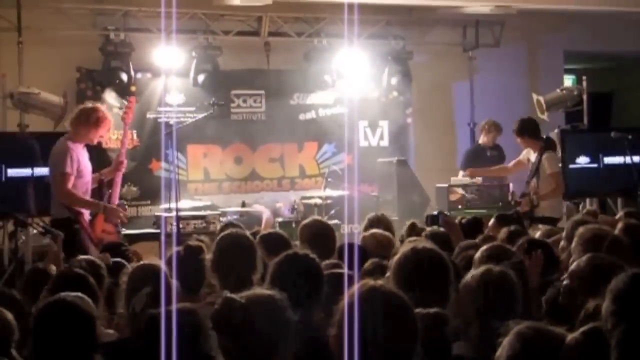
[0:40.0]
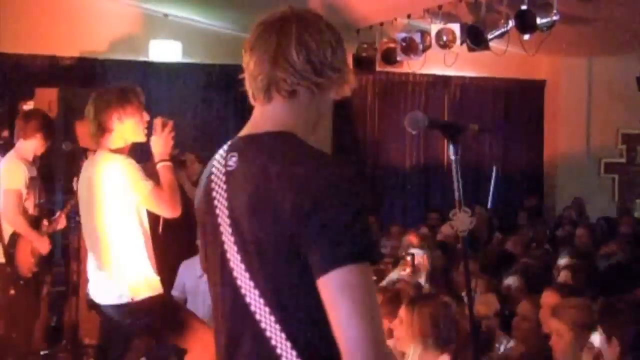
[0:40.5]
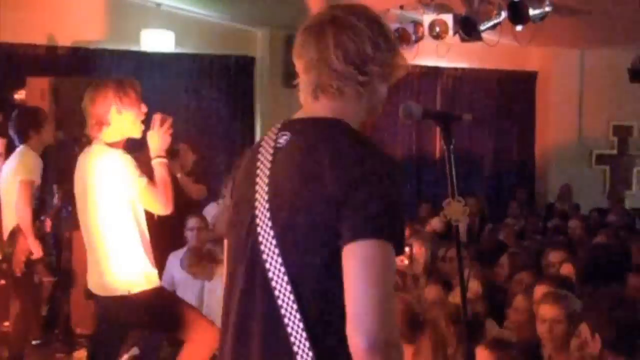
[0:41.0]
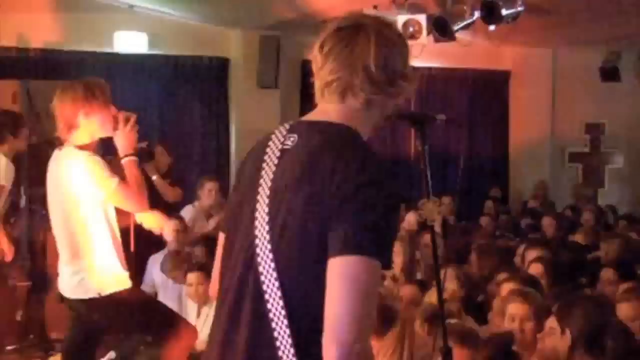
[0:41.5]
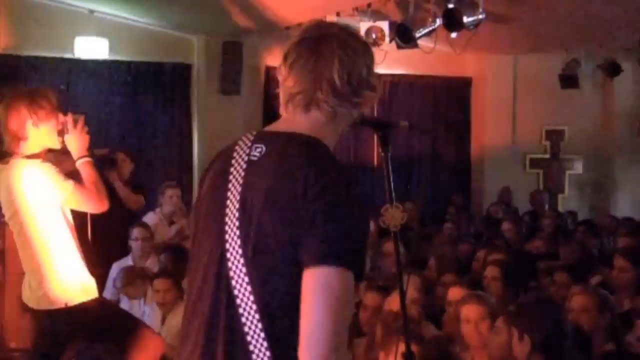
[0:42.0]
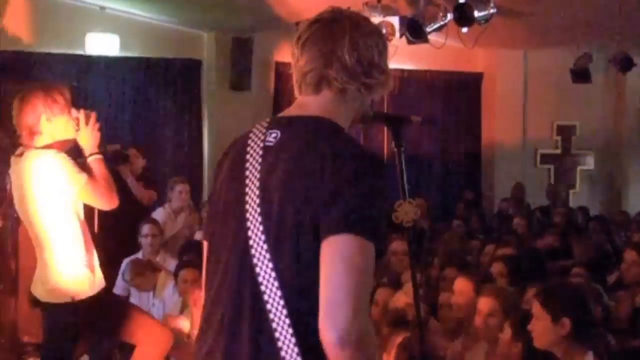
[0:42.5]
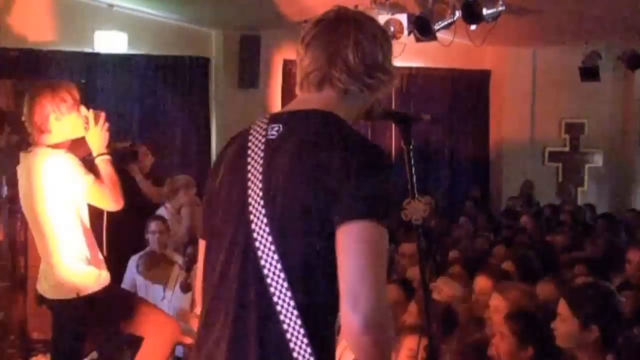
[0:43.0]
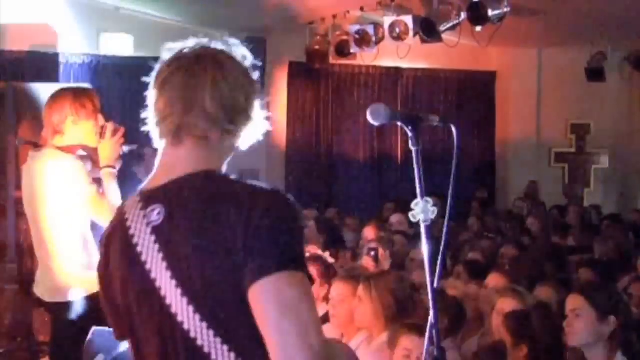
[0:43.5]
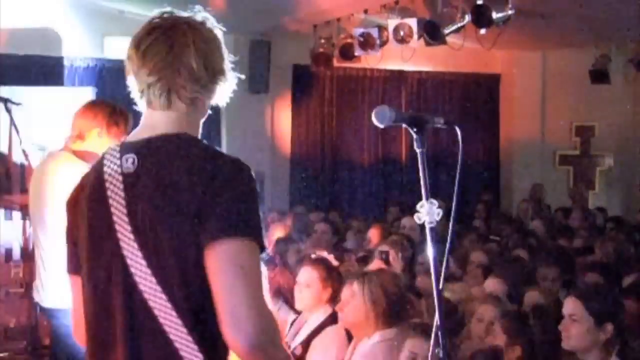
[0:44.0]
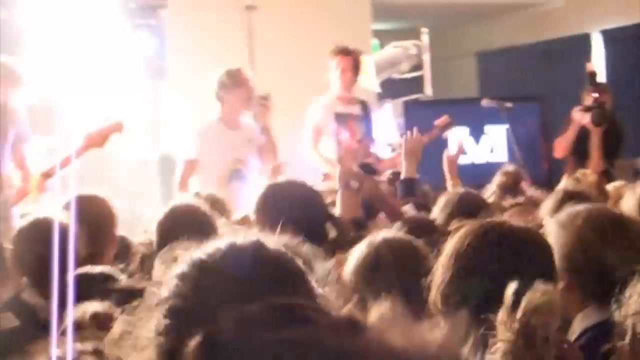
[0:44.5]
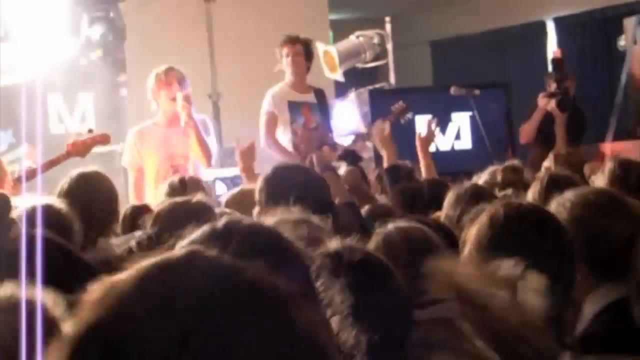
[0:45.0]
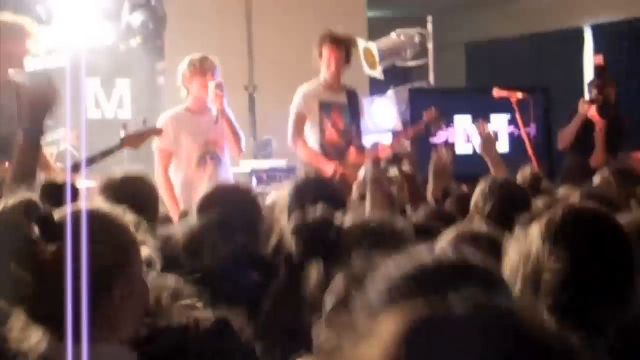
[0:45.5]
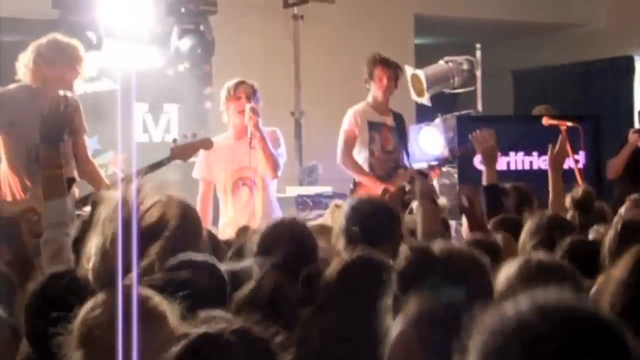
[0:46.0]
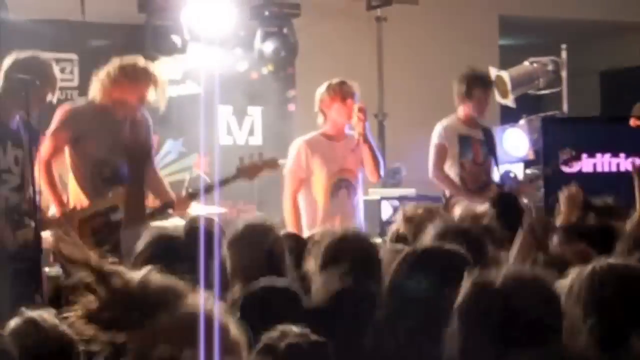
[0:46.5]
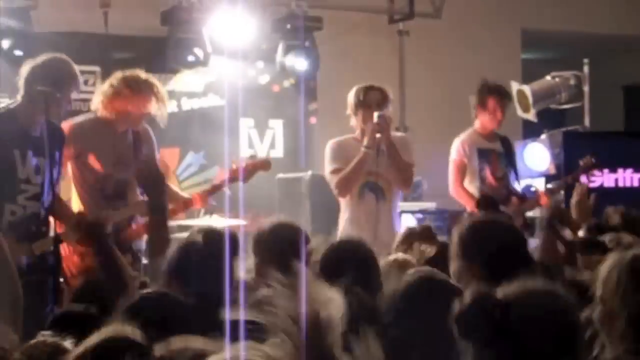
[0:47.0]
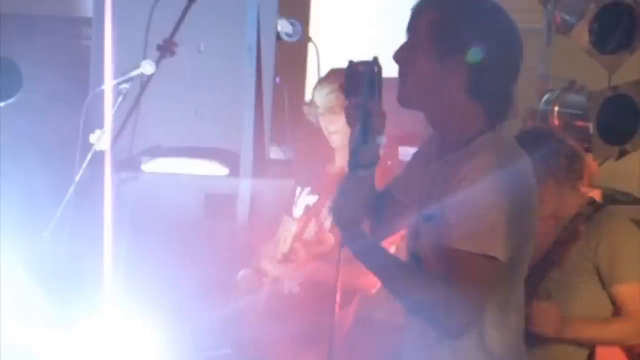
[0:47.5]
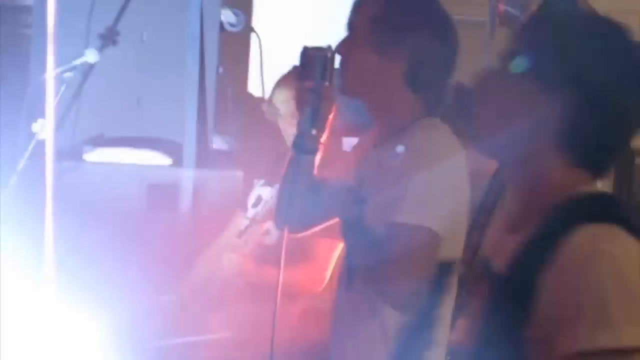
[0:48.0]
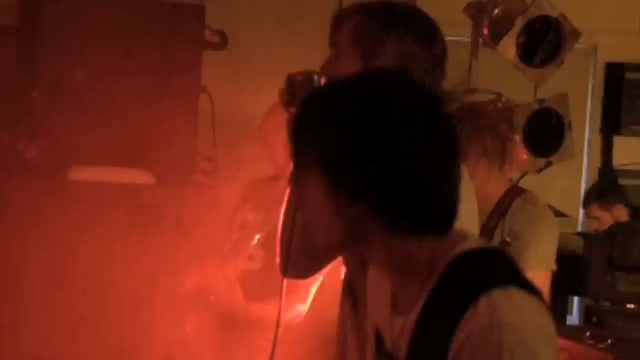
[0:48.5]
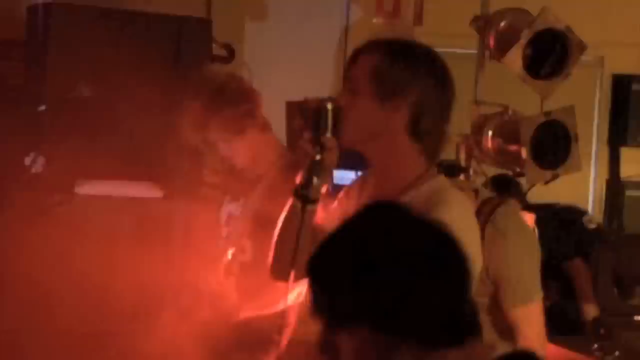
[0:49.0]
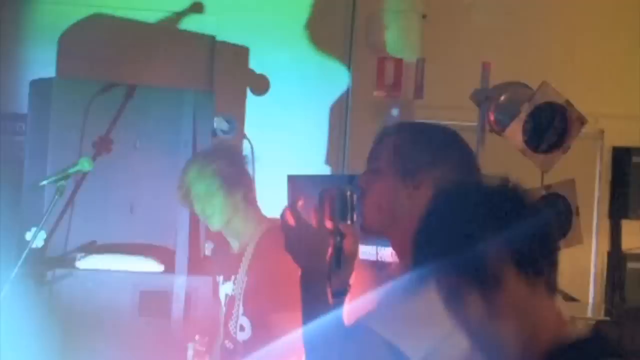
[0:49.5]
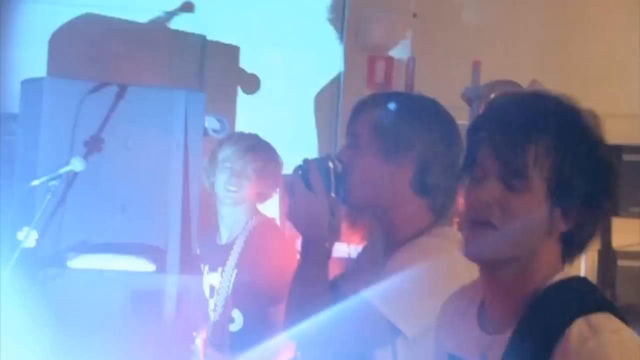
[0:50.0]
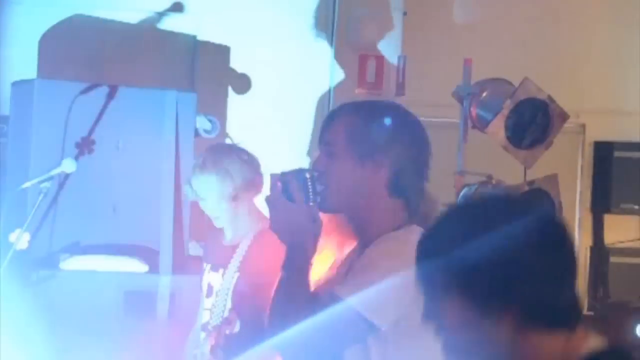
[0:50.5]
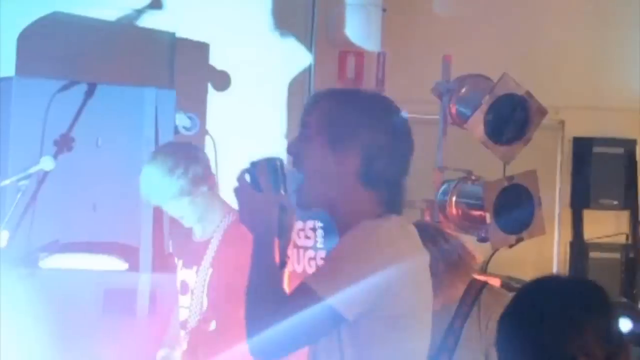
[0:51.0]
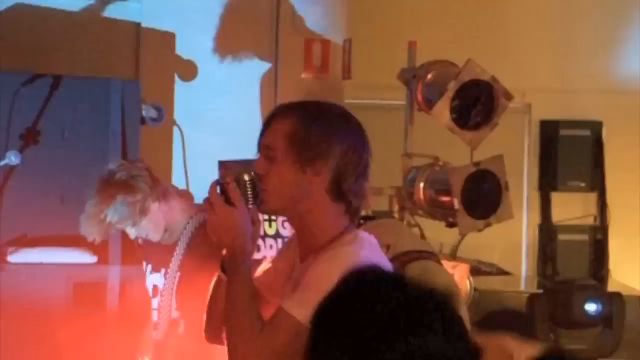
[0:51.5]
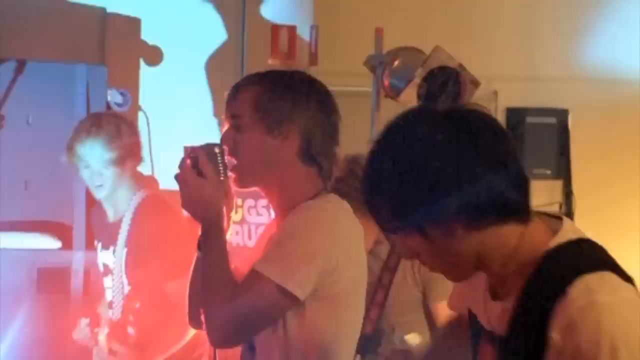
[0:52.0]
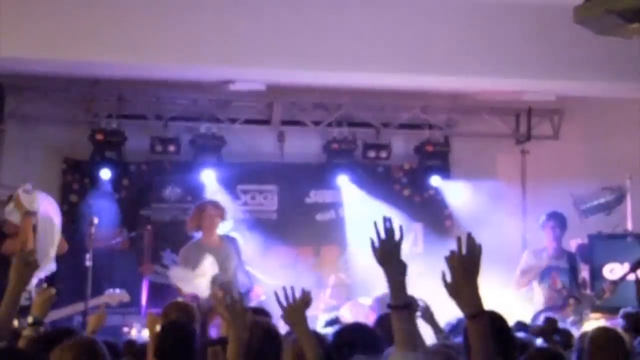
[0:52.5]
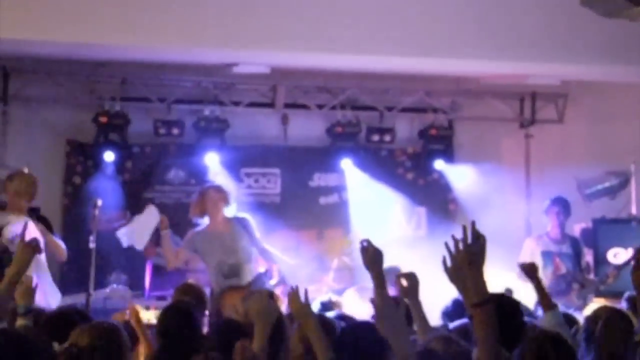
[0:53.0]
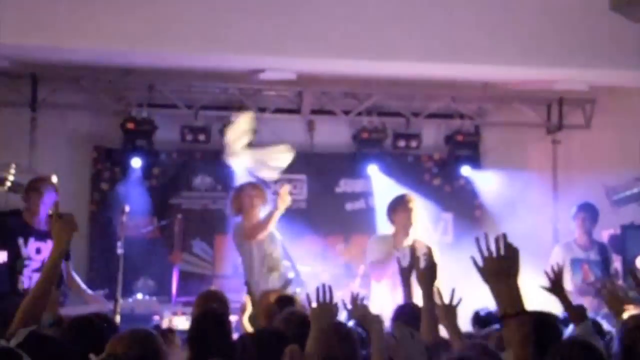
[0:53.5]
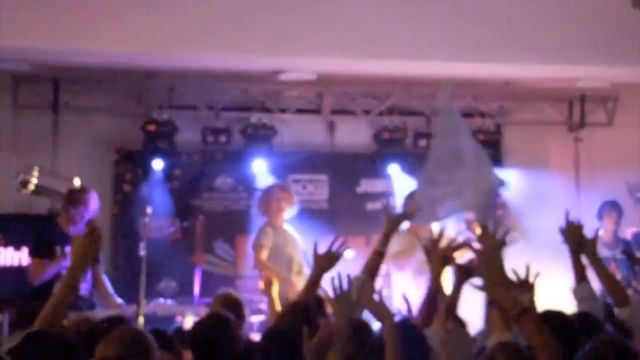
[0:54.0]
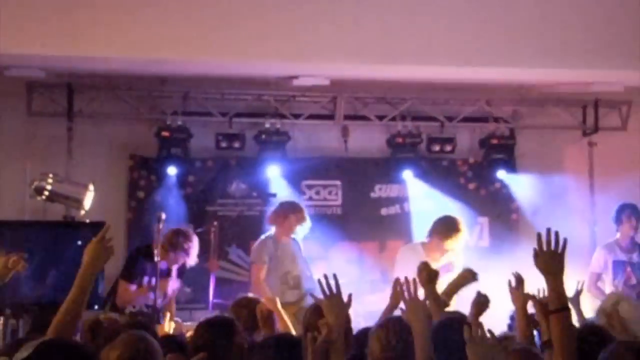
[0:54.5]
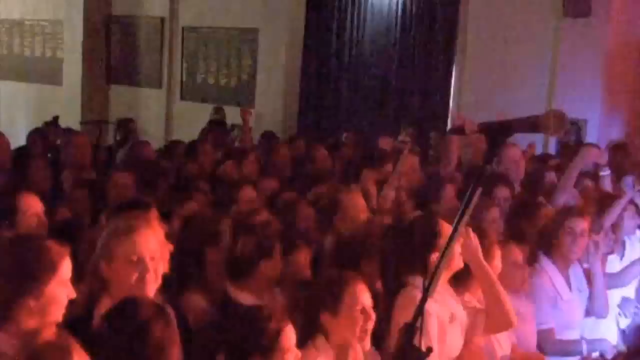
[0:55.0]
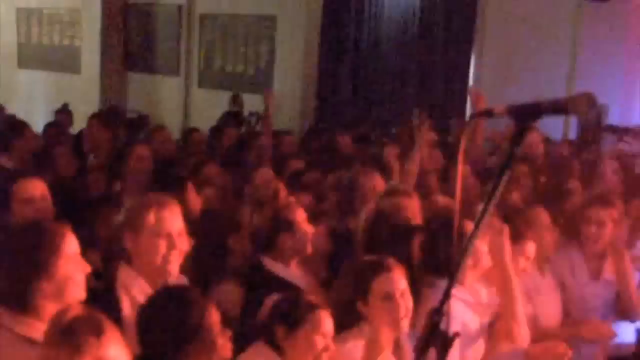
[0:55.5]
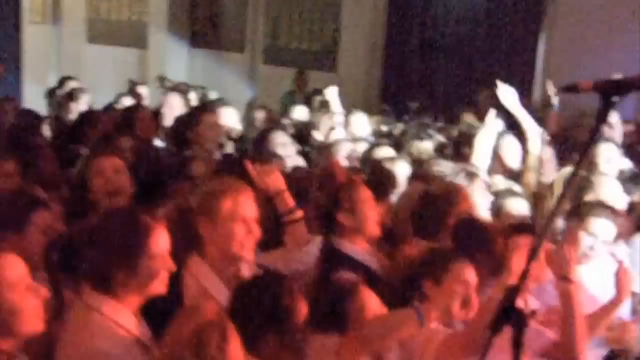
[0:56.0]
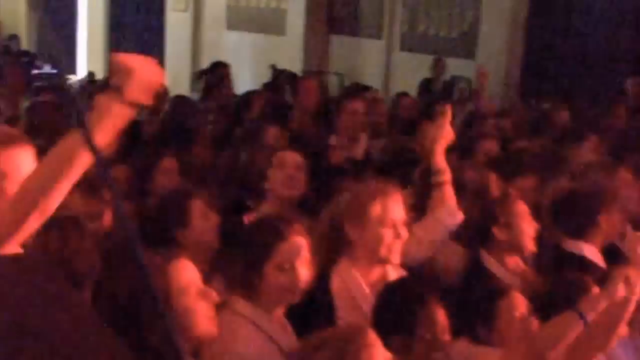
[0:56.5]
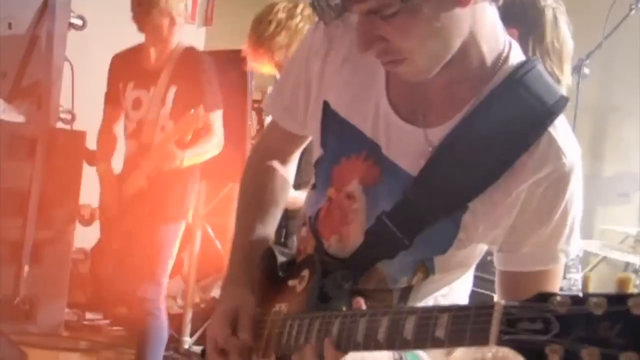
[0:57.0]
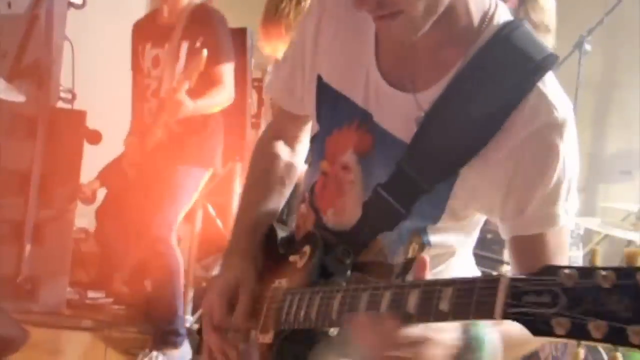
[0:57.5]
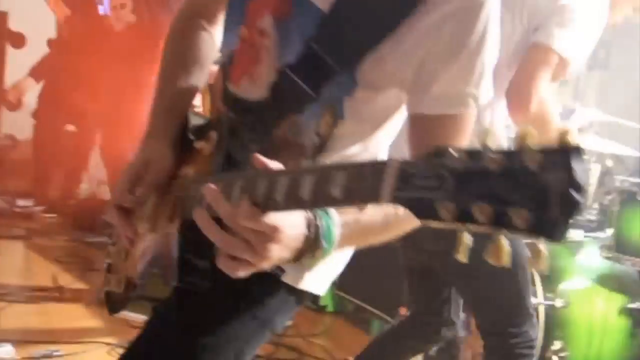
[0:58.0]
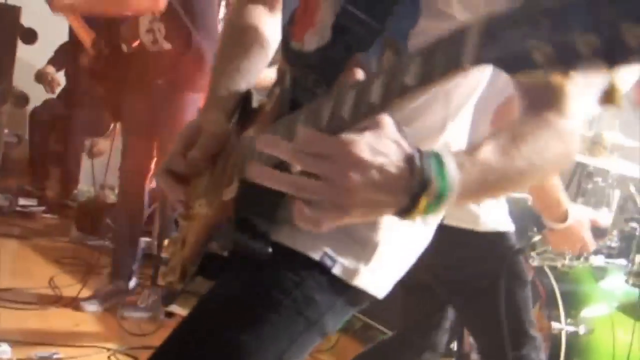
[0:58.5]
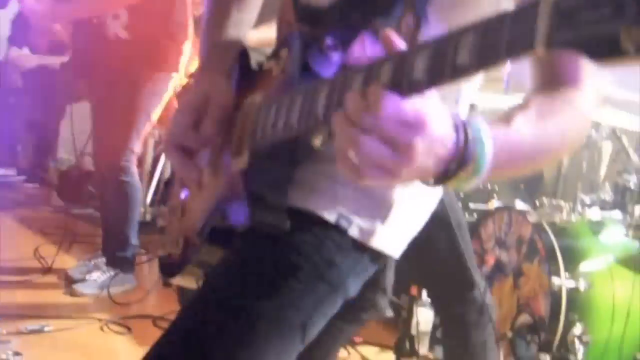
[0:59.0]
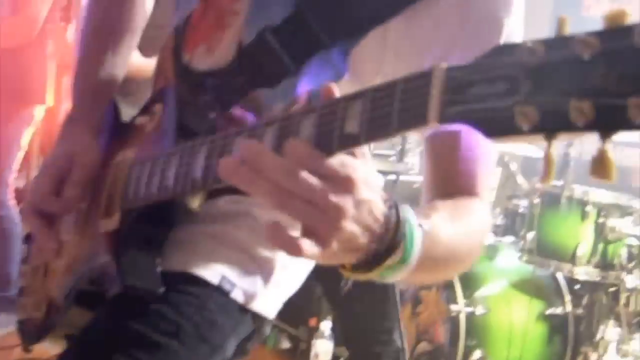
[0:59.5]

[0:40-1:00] Briefly, a young man in a pink shirt is on stage. A shot from a different angle shows a blonde young man with a black and white checked strap over his back and, apparently, a guitar on his front, which he appears to be playing. Next, a screen is on kind of a stage on the right, and a couple of musicians move up and back as they play. The audience is lower down in front, seemingly standing and bobbing up and down a lot. A young man sings while holding a microphone up to his face, bobbing and weaving. Someone at the center of the stage in a light blue shirt throws what looks like a white t-shirt down into the audience. The audience is very large, and everyone is jumping up and down. Then there is another close-up of the young man playing the guitar, with some smoke in the background.